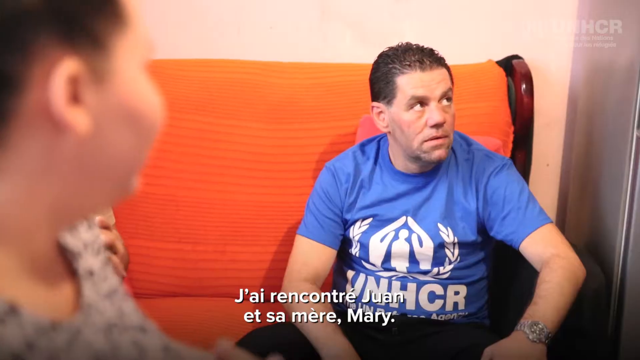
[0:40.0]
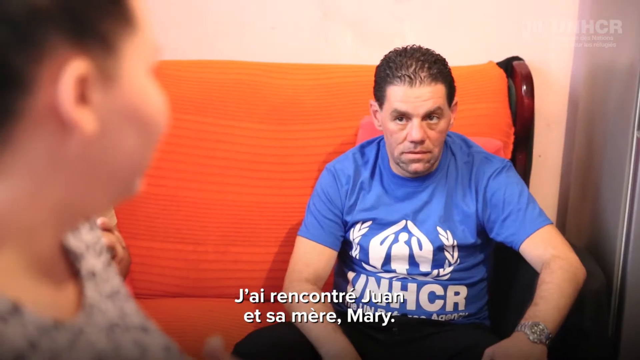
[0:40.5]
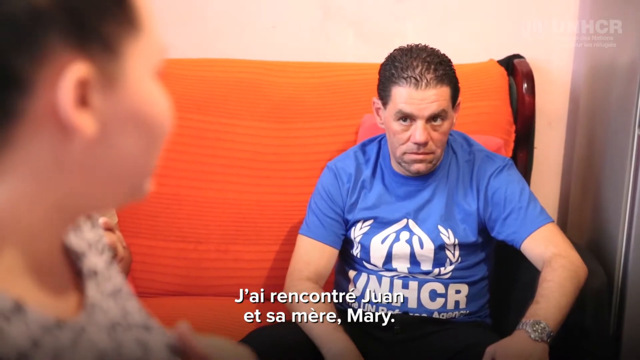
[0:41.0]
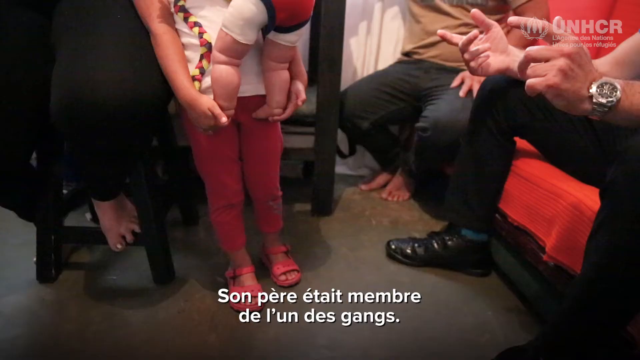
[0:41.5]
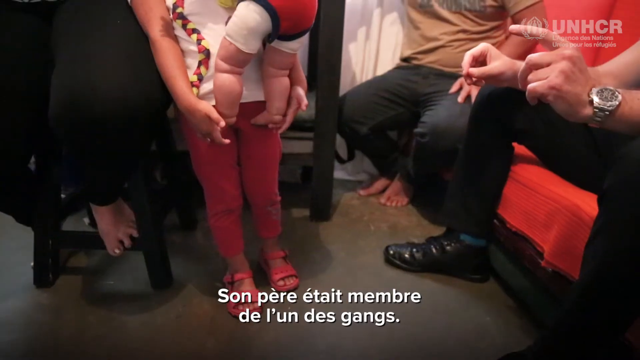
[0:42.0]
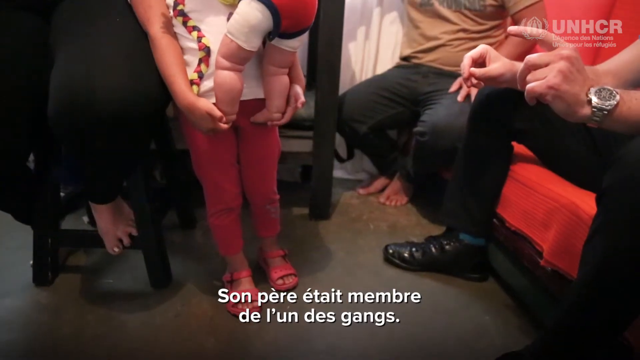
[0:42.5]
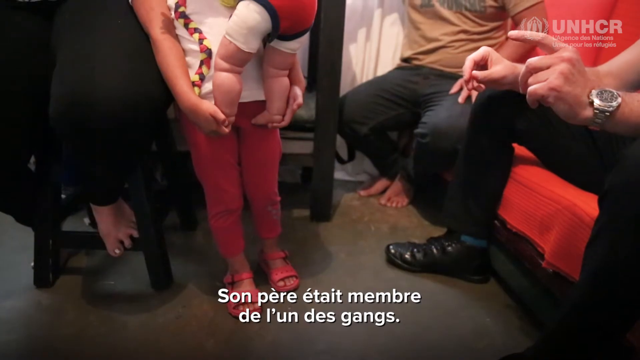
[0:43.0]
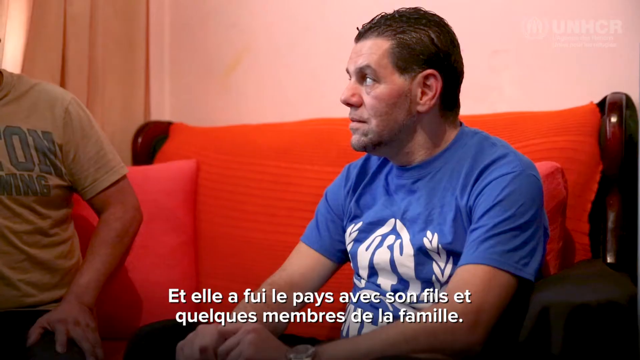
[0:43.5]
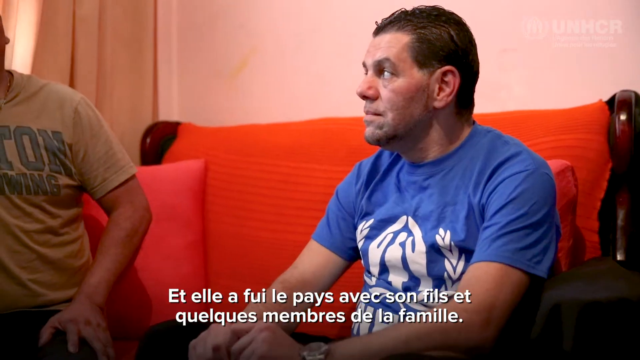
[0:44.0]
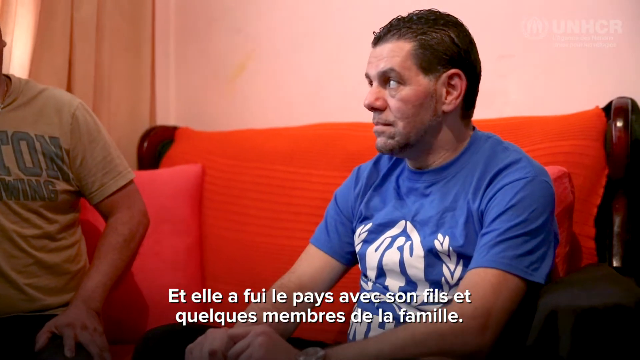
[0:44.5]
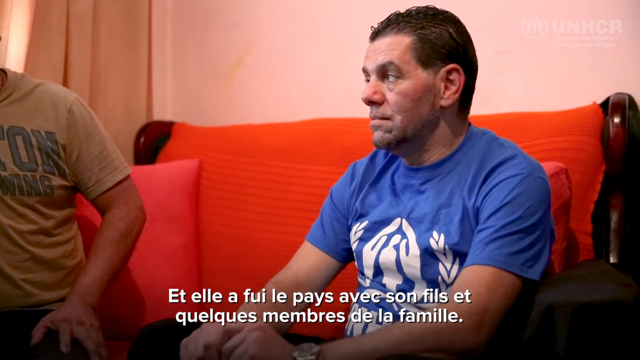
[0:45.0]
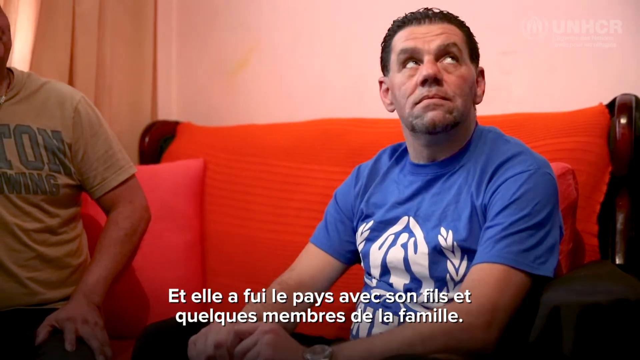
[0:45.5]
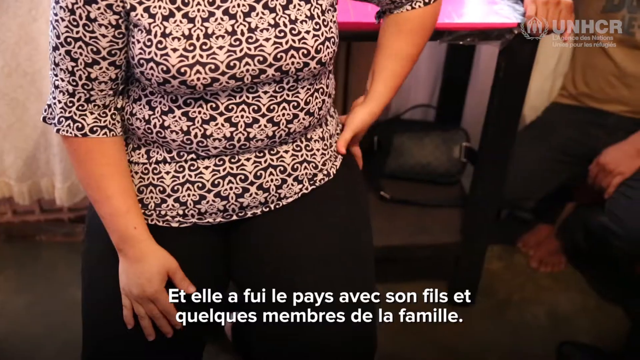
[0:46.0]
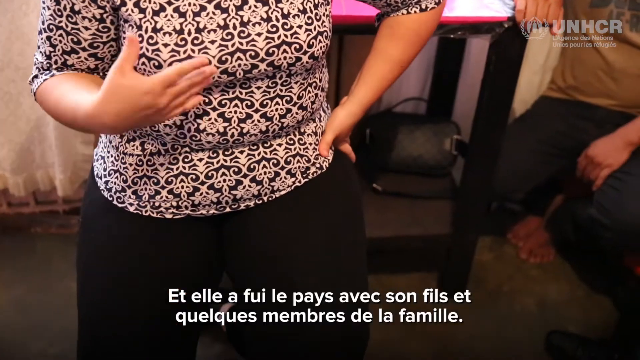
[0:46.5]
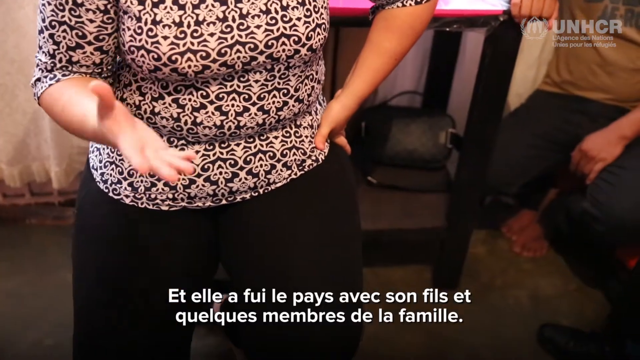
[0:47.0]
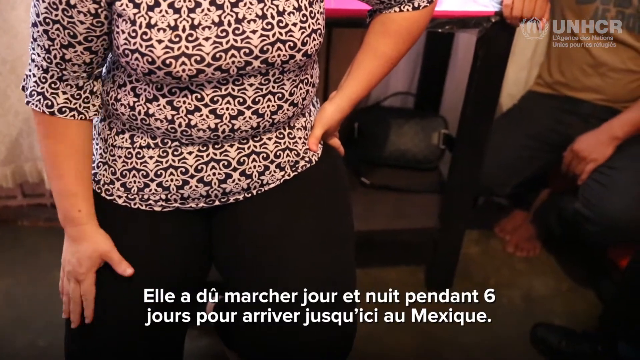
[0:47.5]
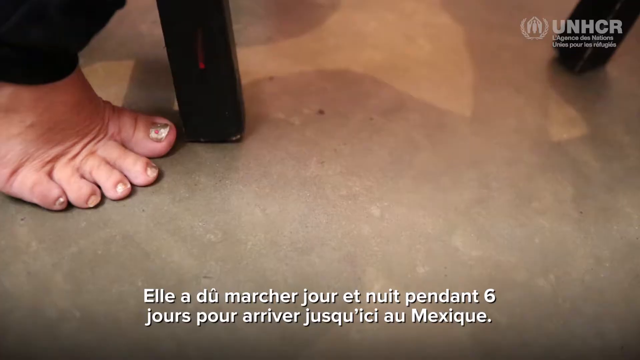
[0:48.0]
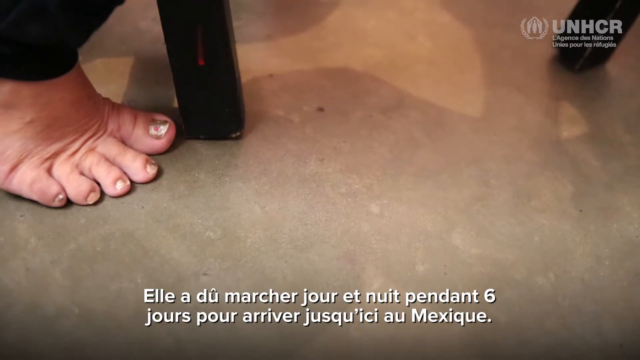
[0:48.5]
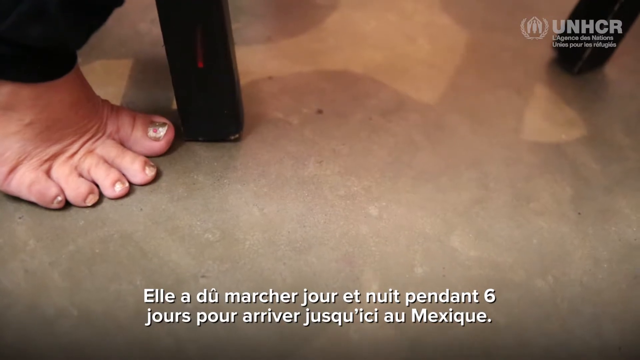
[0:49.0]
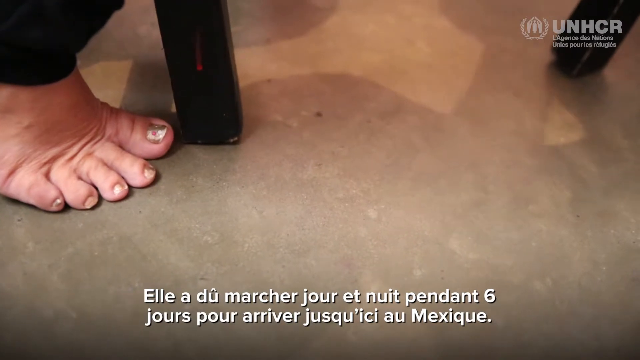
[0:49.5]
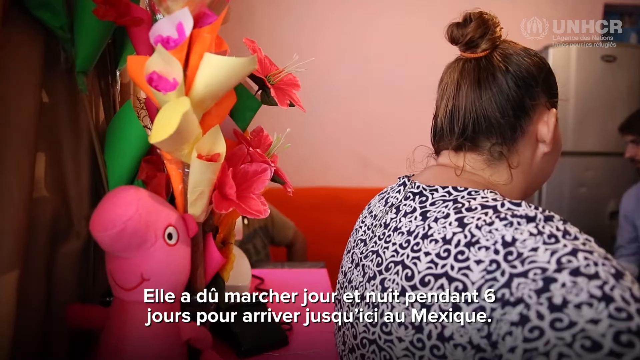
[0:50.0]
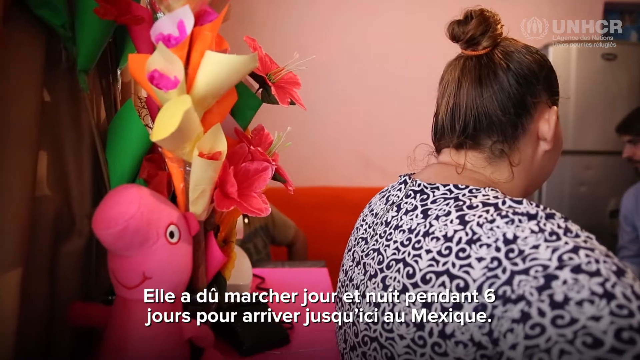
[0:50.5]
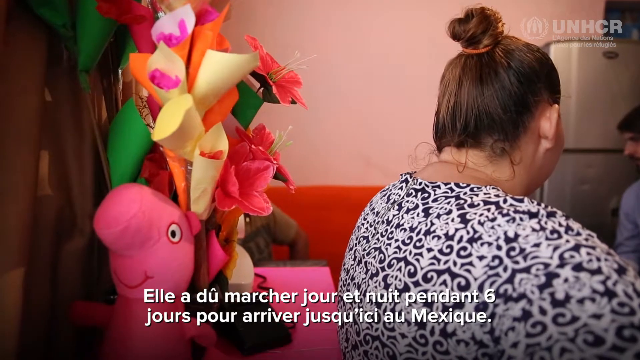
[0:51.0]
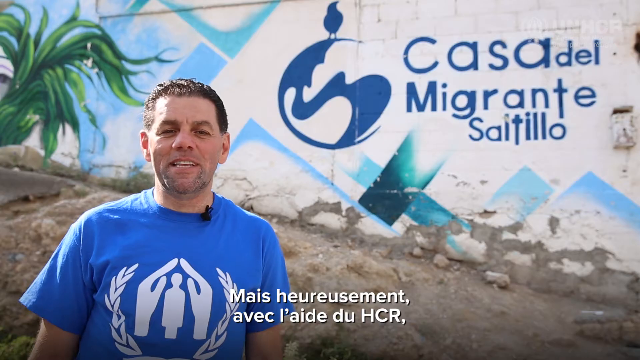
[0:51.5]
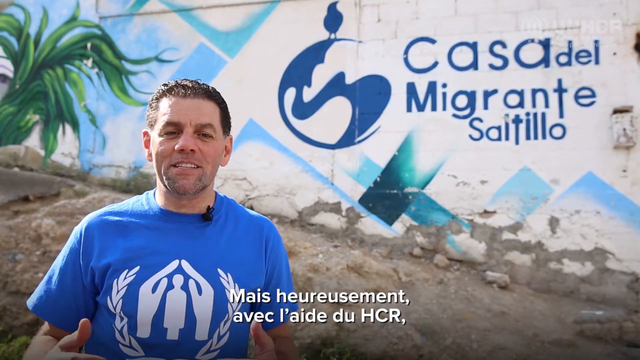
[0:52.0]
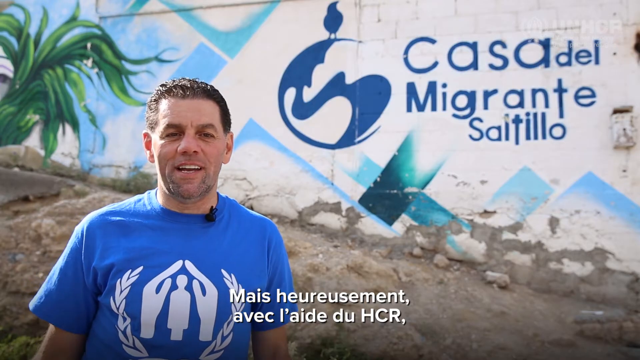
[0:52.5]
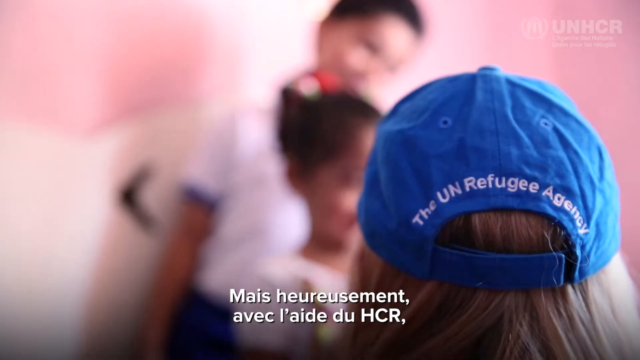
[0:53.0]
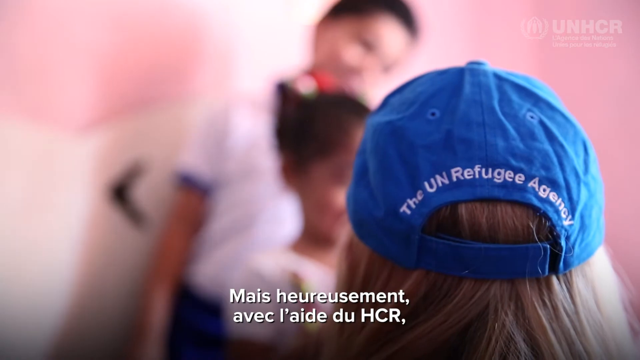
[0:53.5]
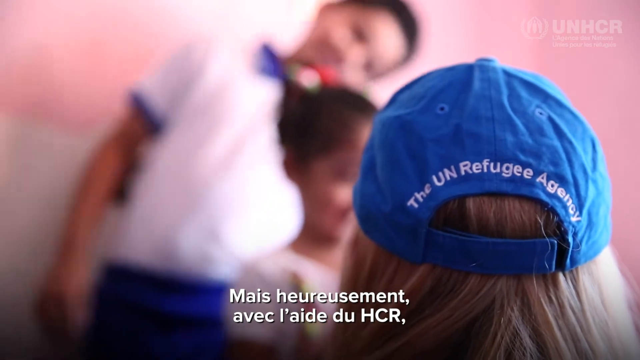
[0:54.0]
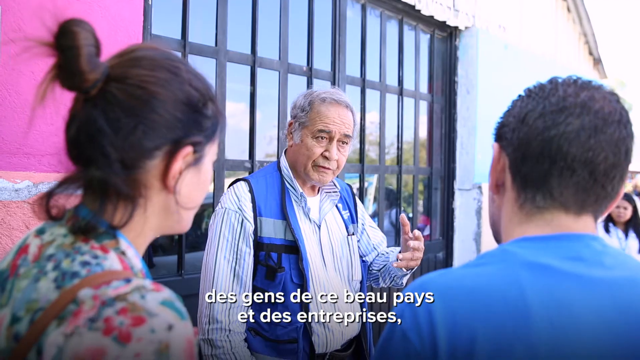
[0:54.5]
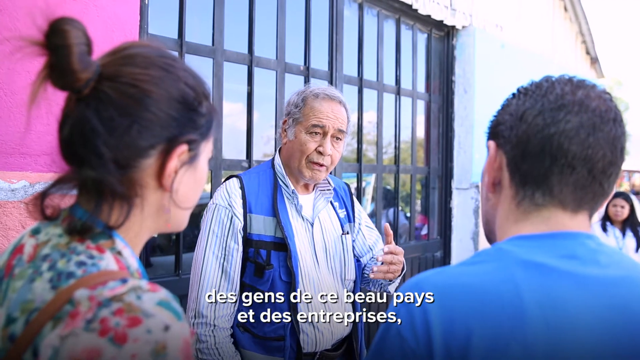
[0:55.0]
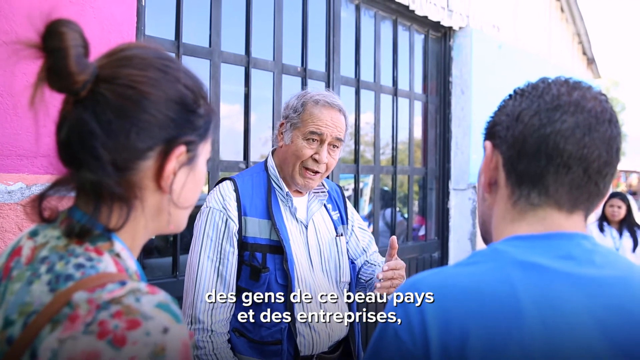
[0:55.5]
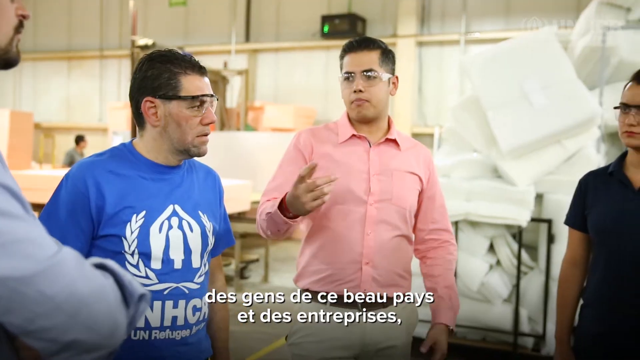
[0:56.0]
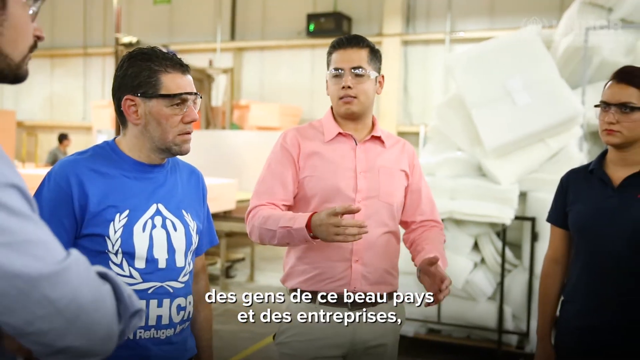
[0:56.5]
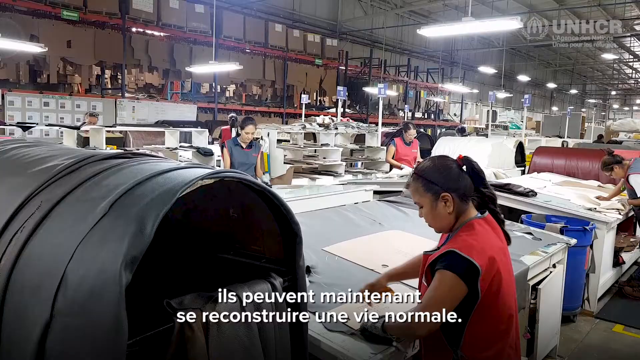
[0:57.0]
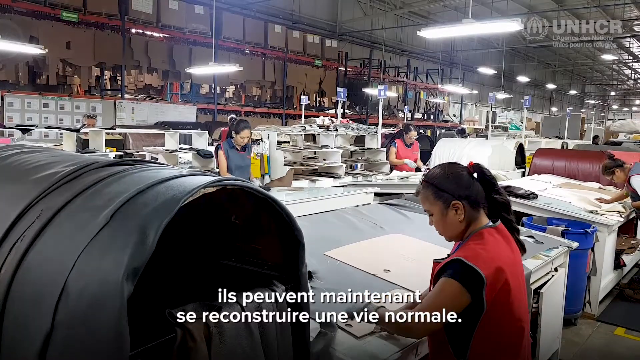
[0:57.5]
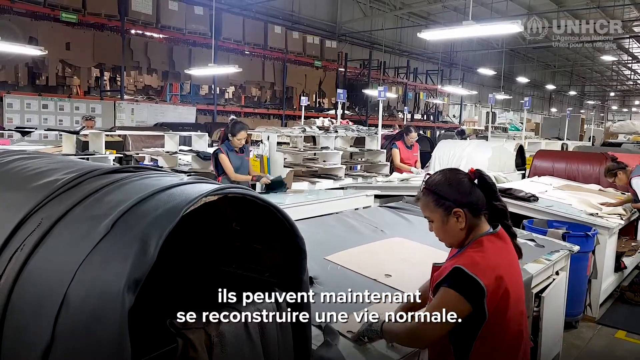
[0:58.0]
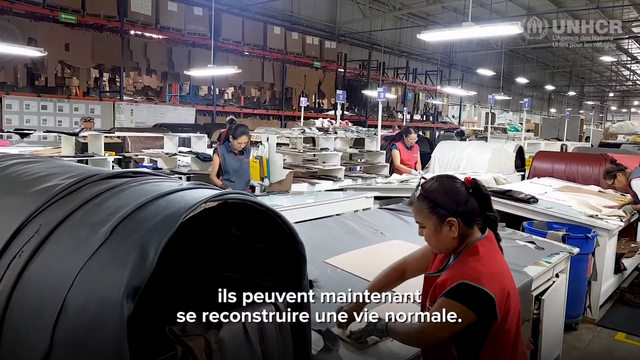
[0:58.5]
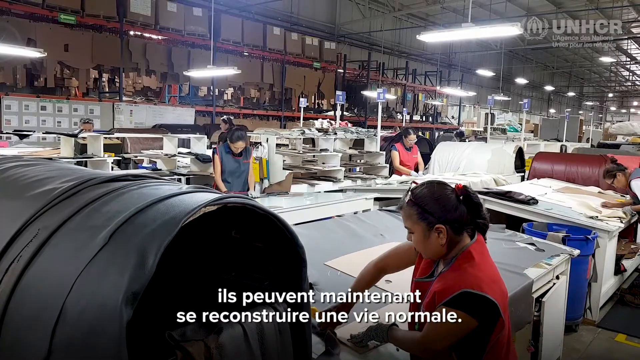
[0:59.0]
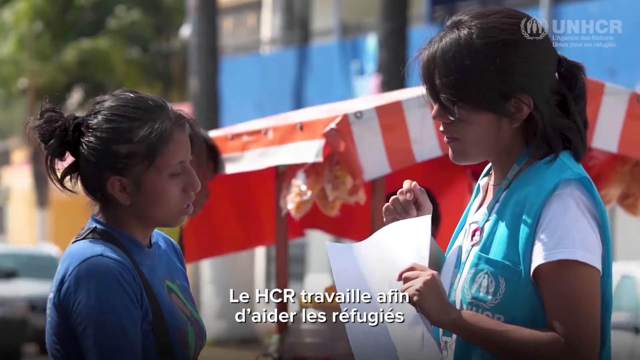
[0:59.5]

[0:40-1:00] The scene looks like a bedroom of some sort, at least inside a home, showing the bottom halves of some people. On the right side are what appear to be two men, with their legs, feet and part of their bodies visible. One man has black shoes and black pants, has his arms on his legs, has a white skin tone, and wears a watch on his left wrist; he is sitting on what looks like a red couch. The man to his right has no shoes on, black pants and a brown shirt. On the far left, a woman sits in a chair, also without shoes, and to her right is a child who appears to be holding a baby. White text in a foreign language appears at the bottom of the video. The scene changes to a close-up of the man on the couch, an older man with black hair combed backward, who looks toward somebody off camera and nods his head. The scene switches between multiple angles of the household, then focuses on a woman's back, with a little stuffed animal, like a pink pig or something, on the bottom left. The scene switches to a man in a blue shirt standing in front of a wall like a mural that says "Casa del Migrante Saitillo", talking toward the camera. The scene switches a couple of times, showing a bunch of people talking to each other.